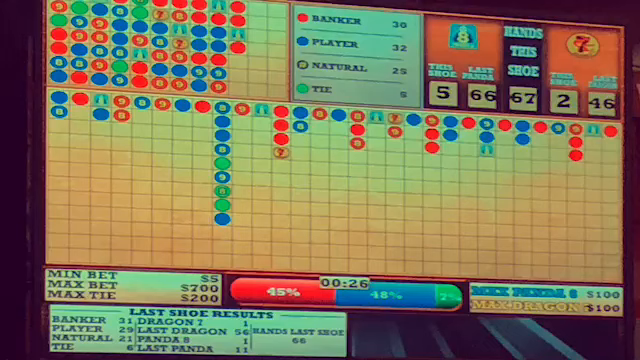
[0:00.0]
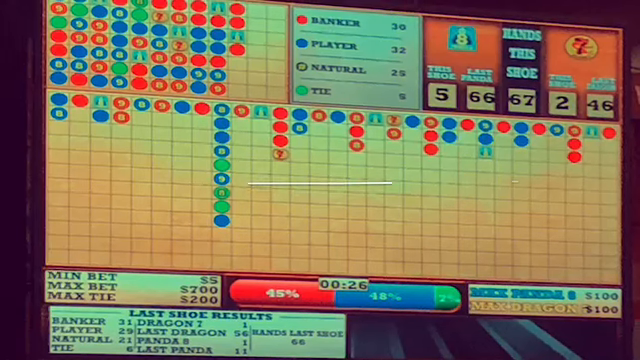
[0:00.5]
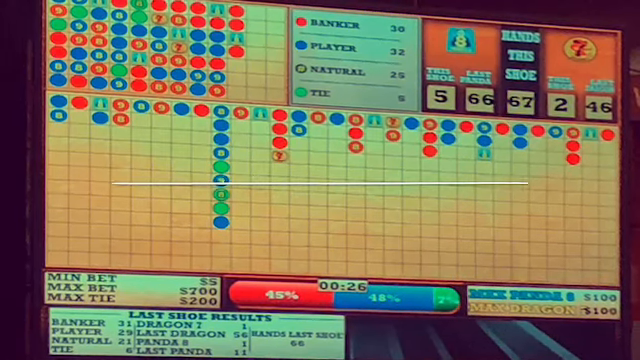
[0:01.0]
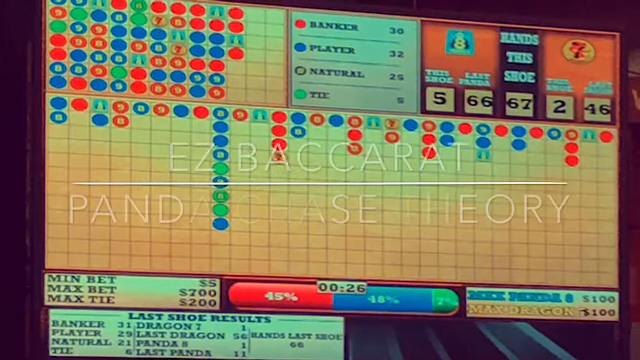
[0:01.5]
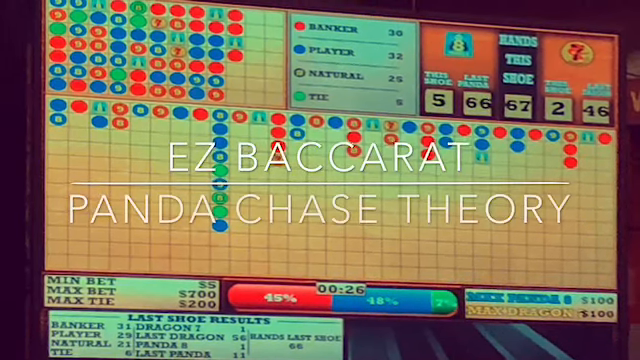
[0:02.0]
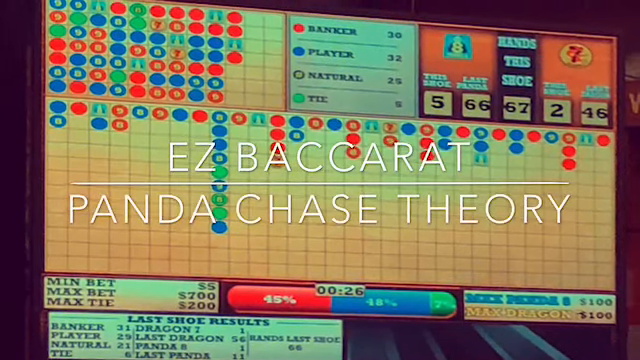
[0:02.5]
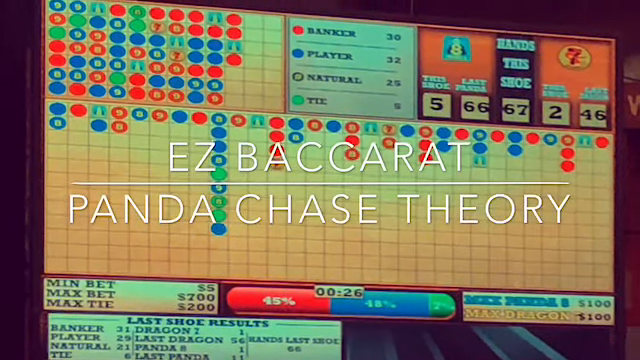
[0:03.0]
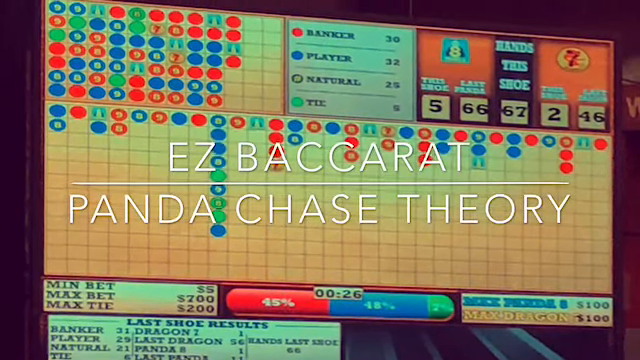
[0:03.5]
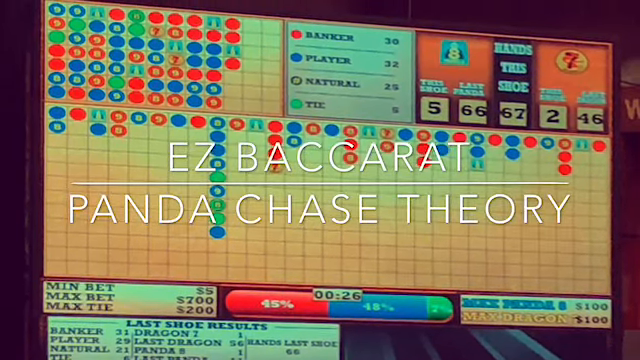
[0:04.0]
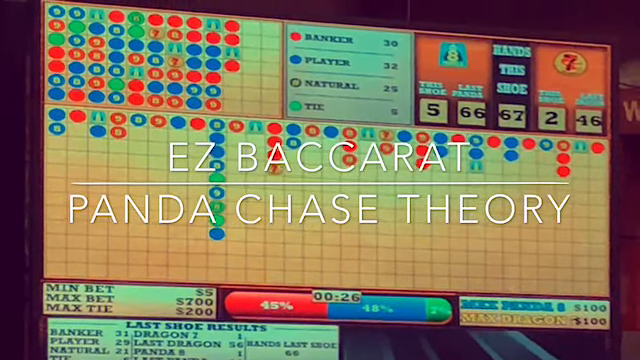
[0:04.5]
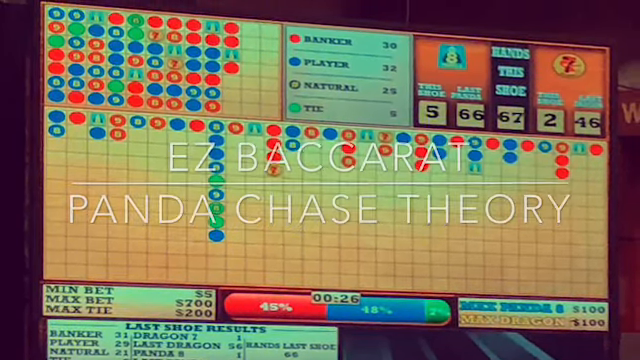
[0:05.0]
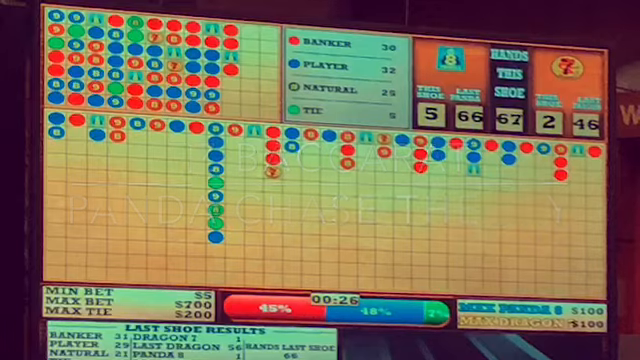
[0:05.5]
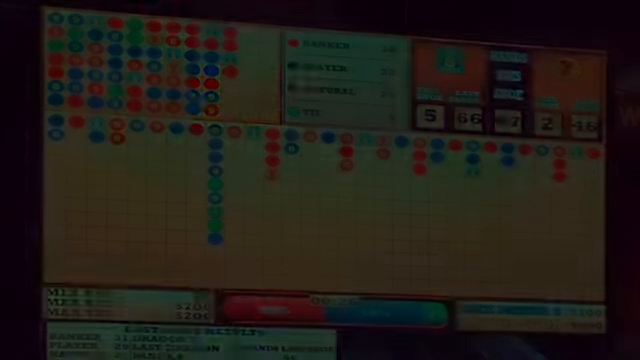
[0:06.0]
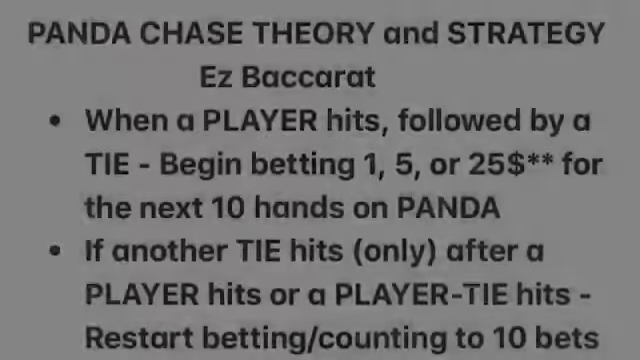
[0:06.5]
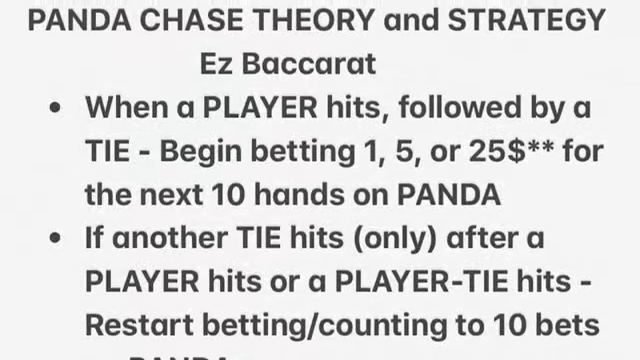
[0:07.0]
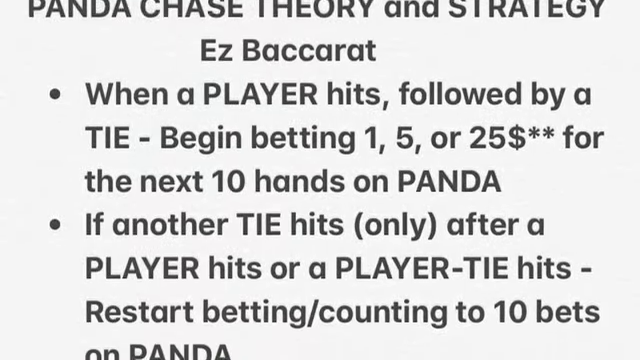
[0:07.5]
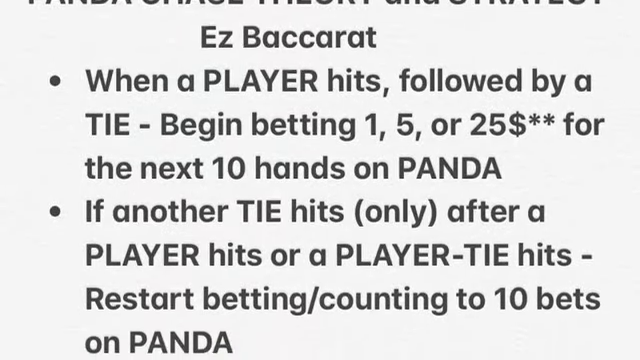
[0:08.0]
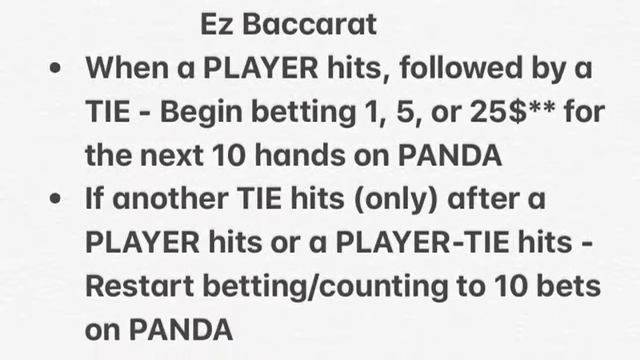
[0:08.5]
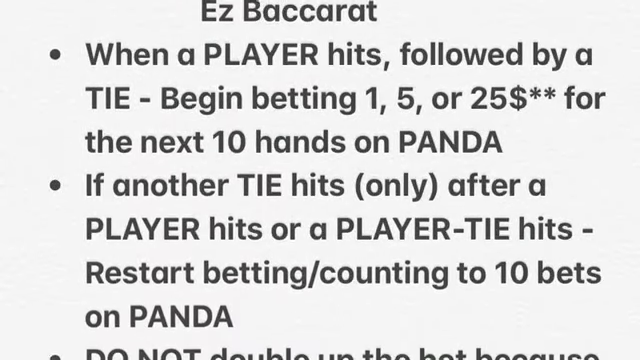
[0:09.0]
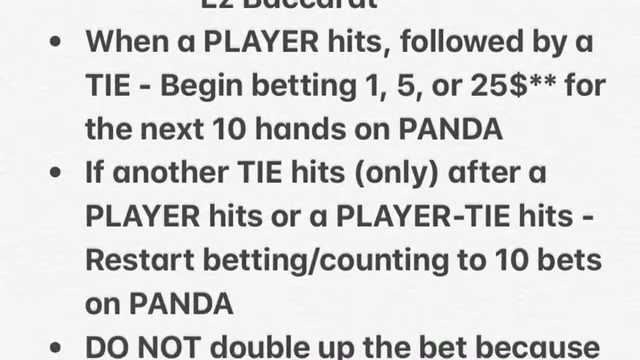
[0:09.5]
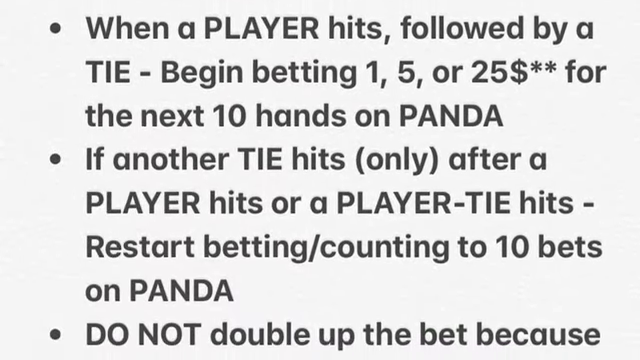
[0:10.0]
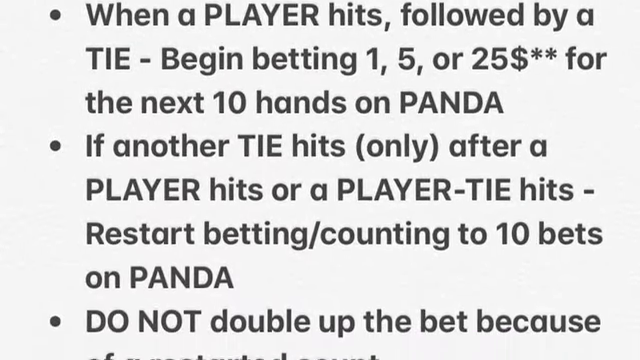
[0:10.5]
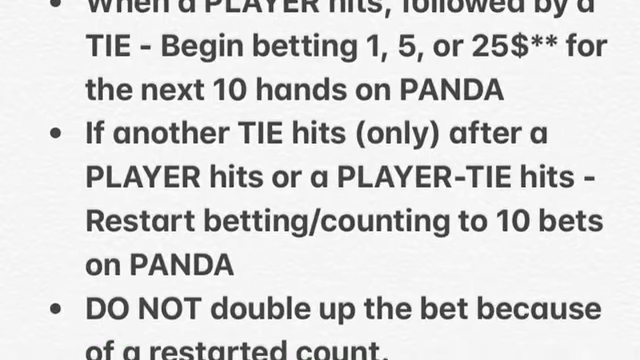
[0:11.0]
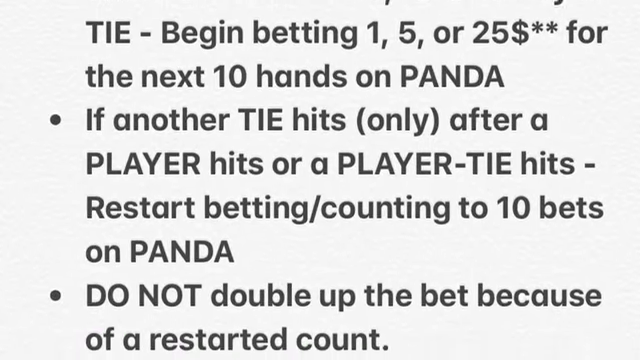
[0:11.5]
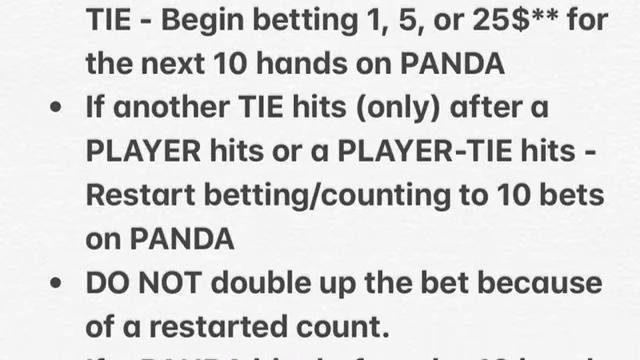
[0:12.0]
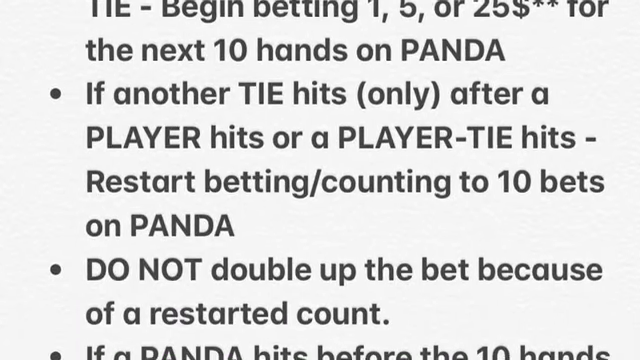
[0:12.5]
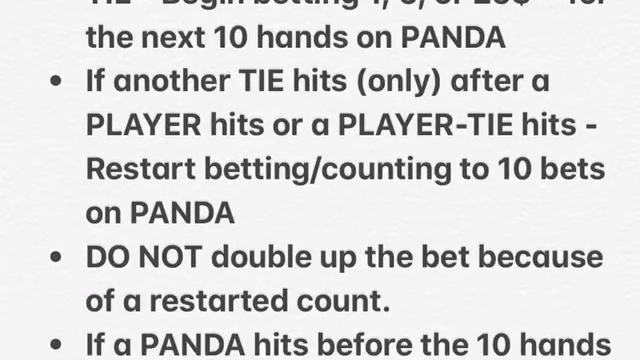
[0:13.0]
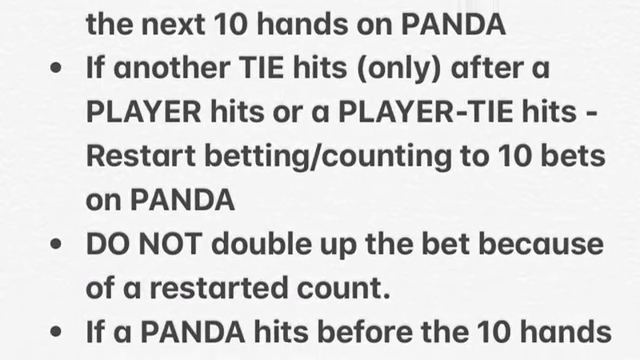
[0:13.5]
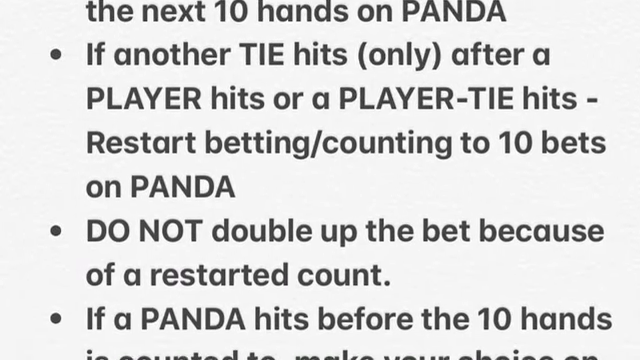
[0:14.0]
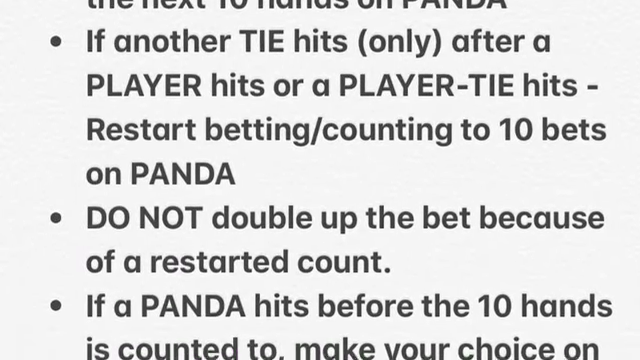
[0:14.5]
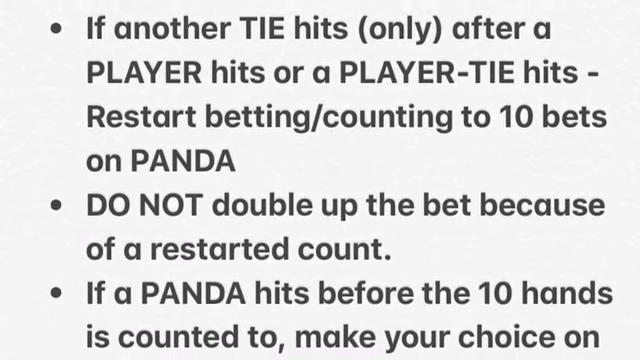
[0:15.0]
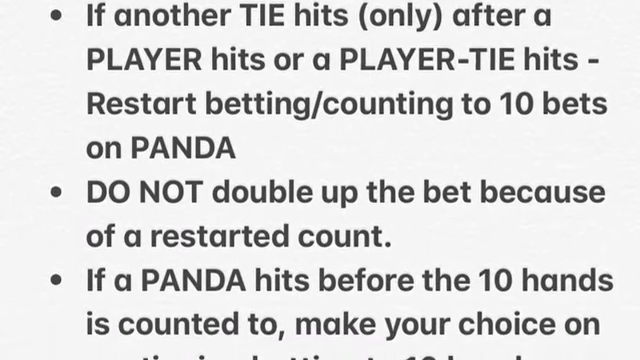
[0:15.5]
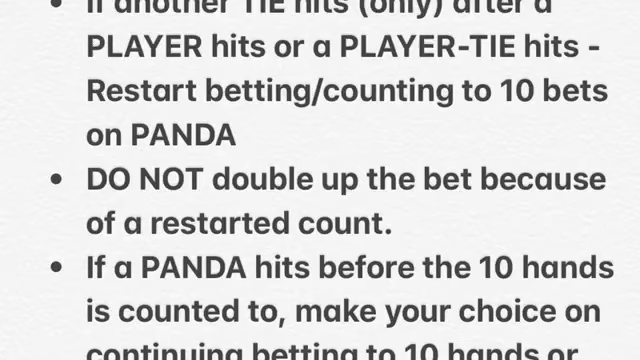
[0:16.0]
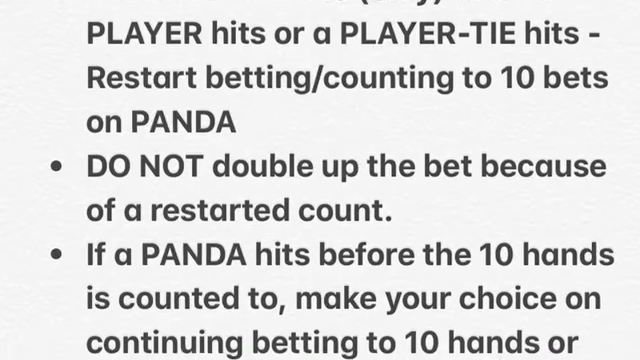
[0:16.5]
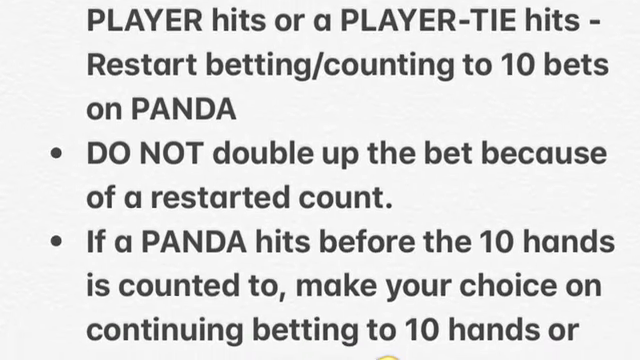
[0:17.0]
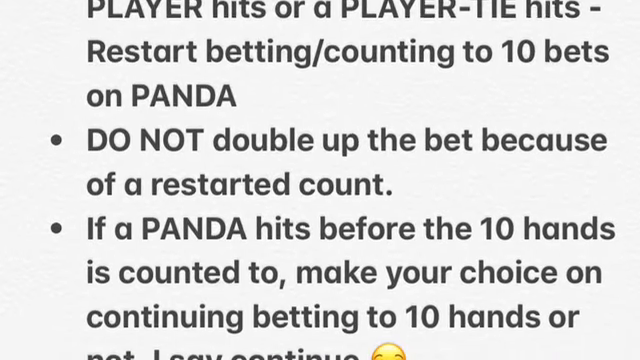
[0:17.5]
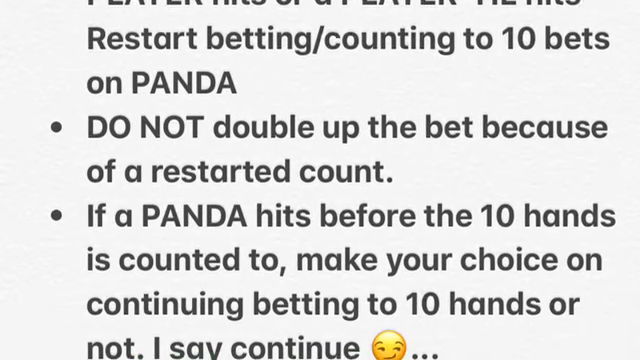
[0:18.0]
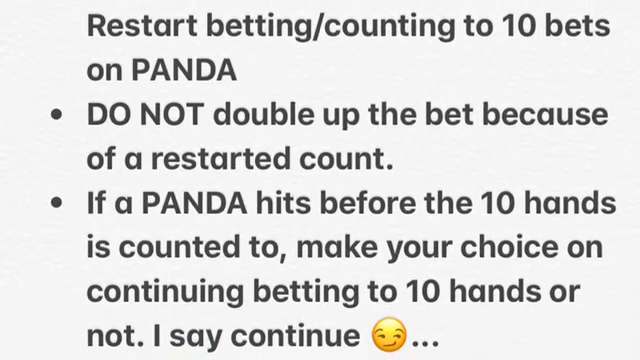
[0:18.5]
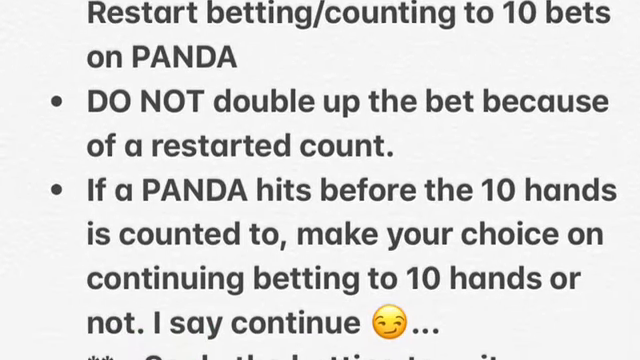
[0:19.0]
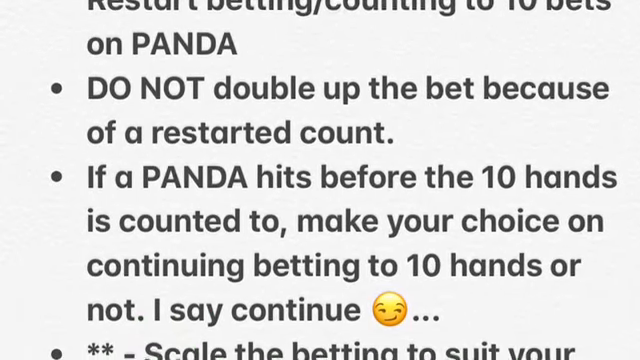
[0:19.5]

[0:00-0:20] A game of baccarat appears to be played at a casino, with bets placed on the banker or the player and chips in play.